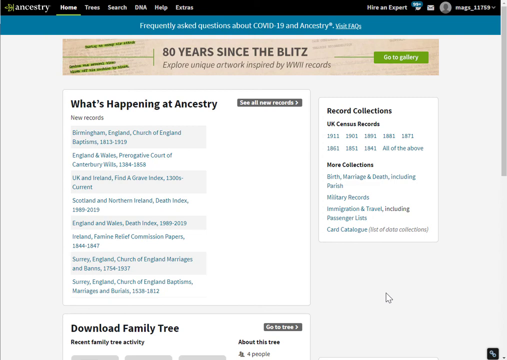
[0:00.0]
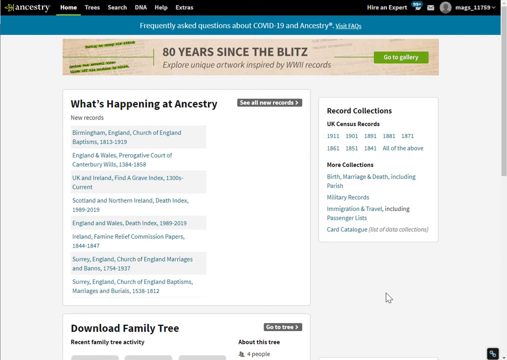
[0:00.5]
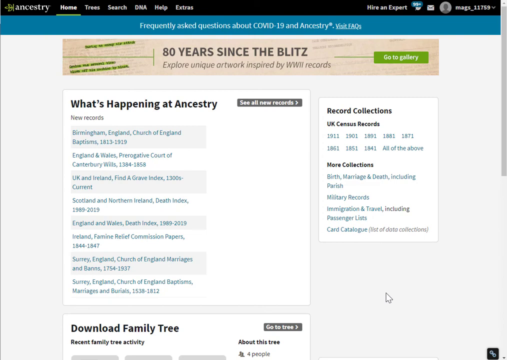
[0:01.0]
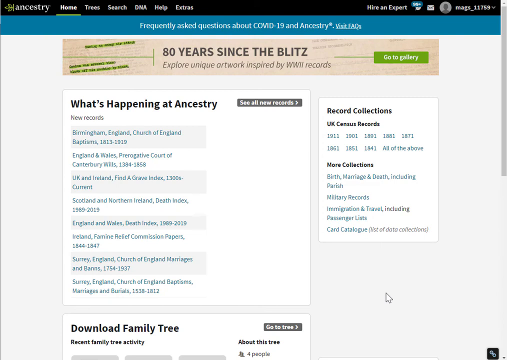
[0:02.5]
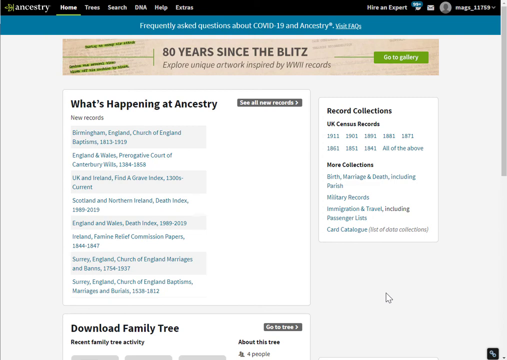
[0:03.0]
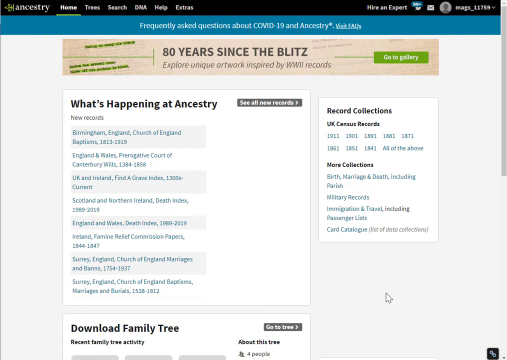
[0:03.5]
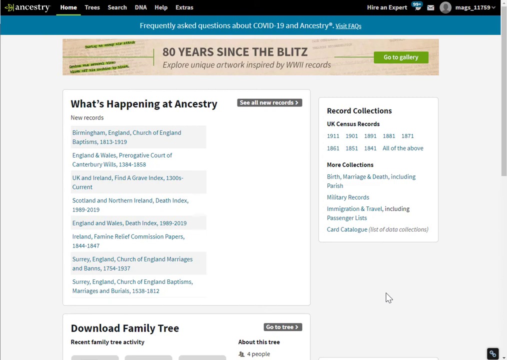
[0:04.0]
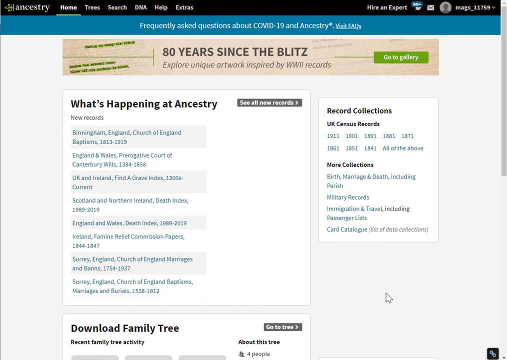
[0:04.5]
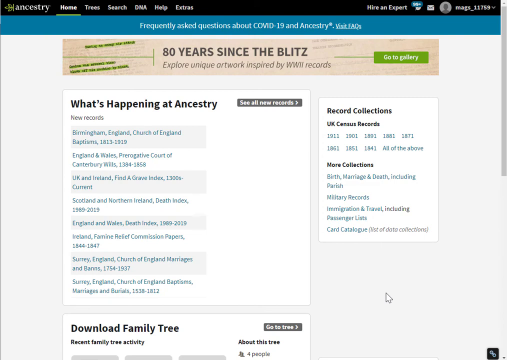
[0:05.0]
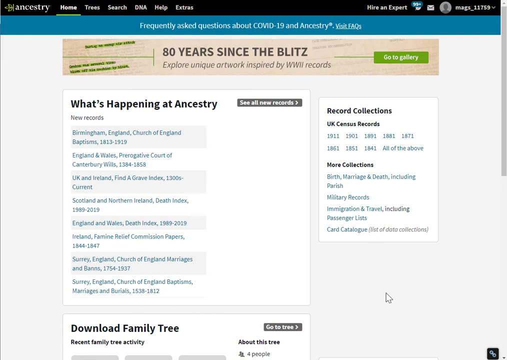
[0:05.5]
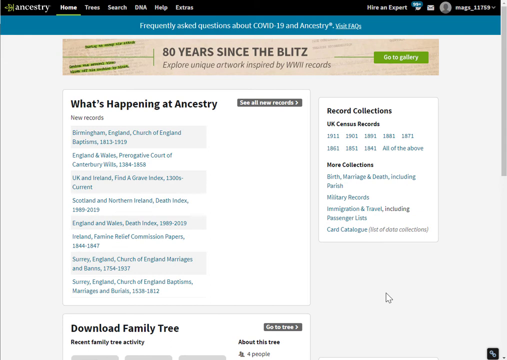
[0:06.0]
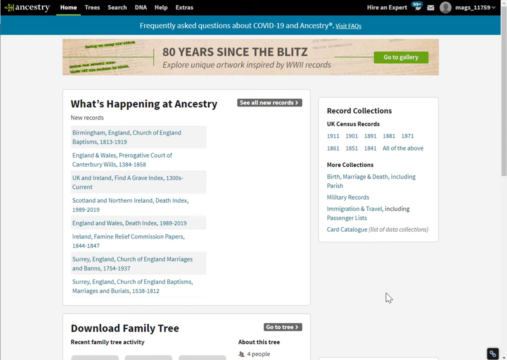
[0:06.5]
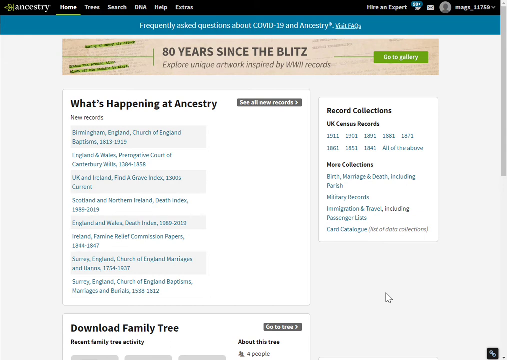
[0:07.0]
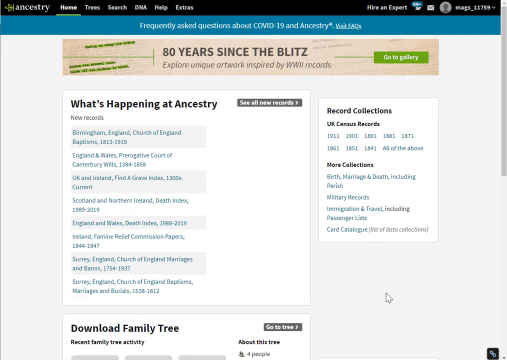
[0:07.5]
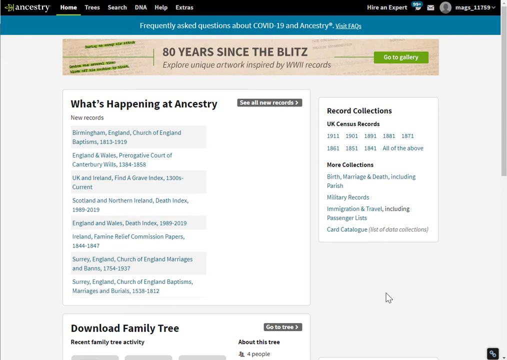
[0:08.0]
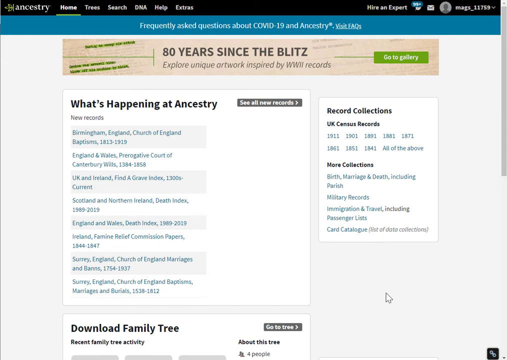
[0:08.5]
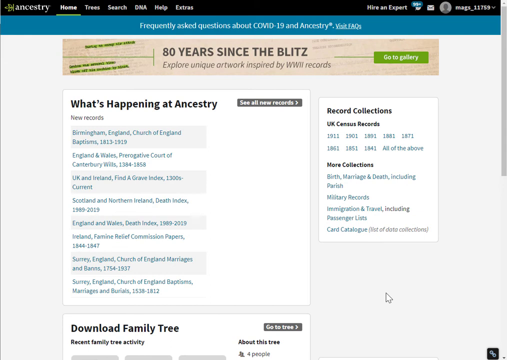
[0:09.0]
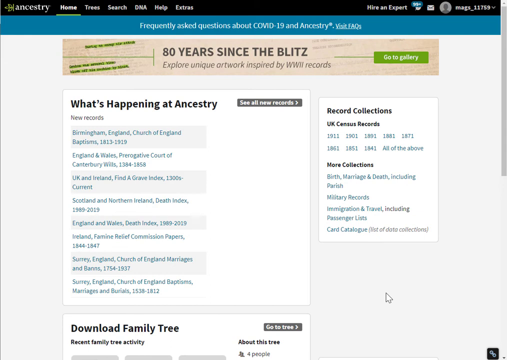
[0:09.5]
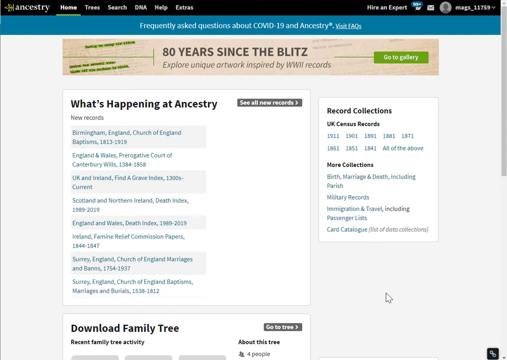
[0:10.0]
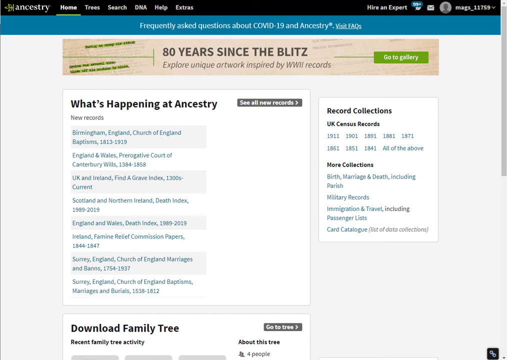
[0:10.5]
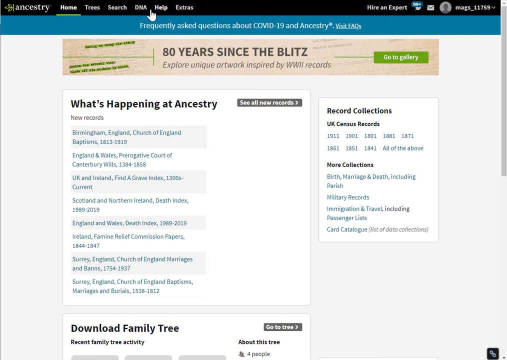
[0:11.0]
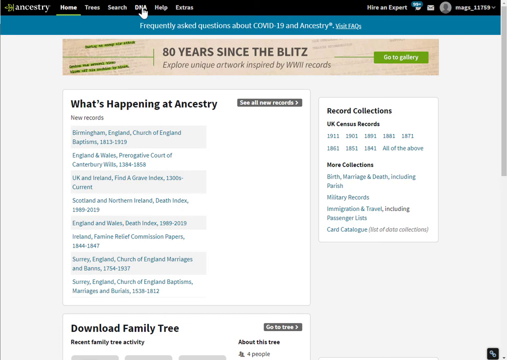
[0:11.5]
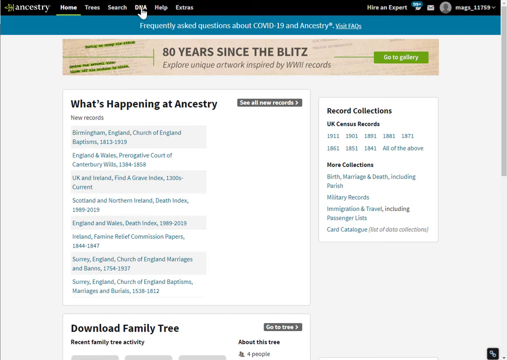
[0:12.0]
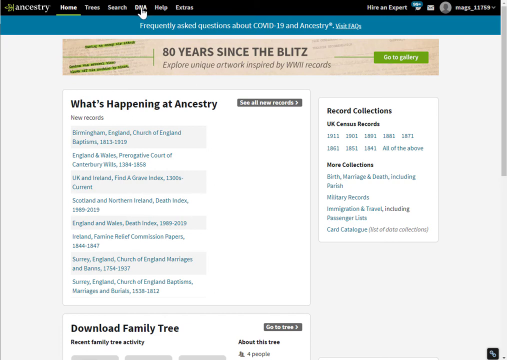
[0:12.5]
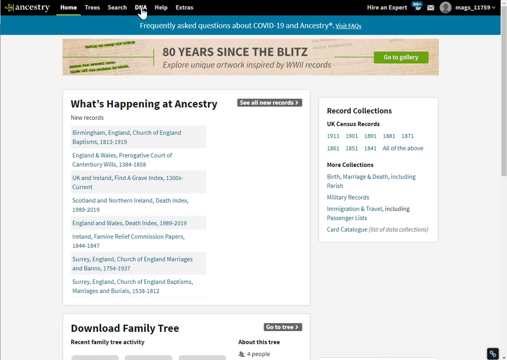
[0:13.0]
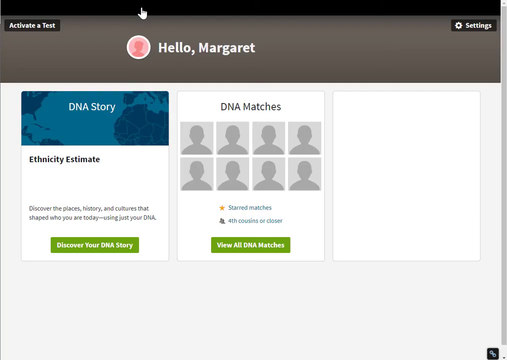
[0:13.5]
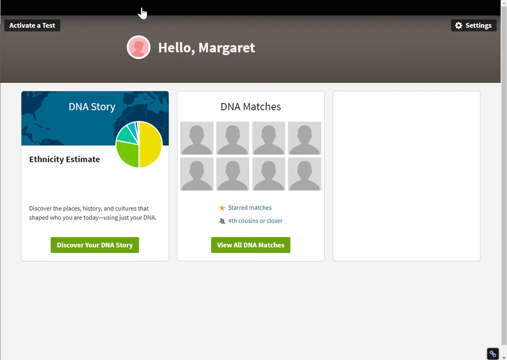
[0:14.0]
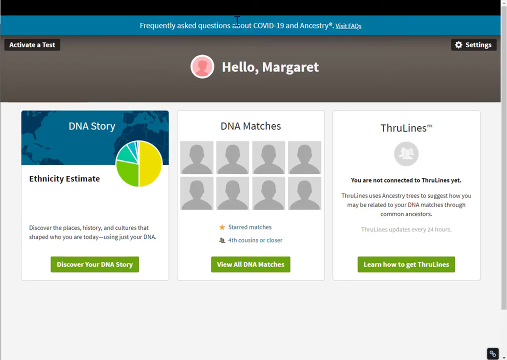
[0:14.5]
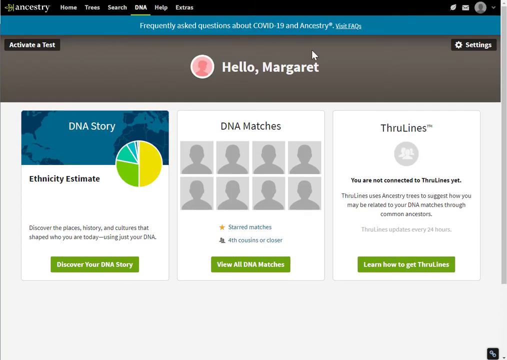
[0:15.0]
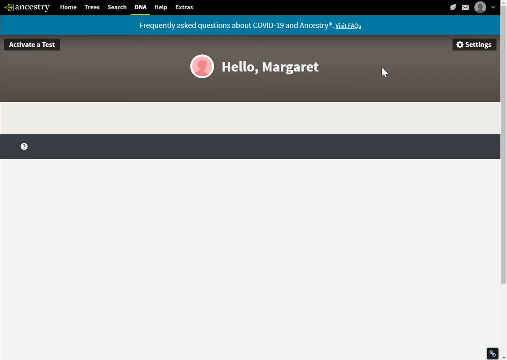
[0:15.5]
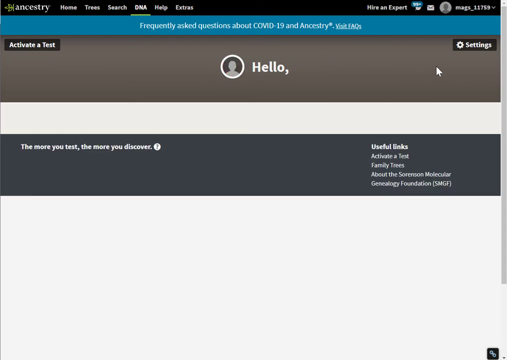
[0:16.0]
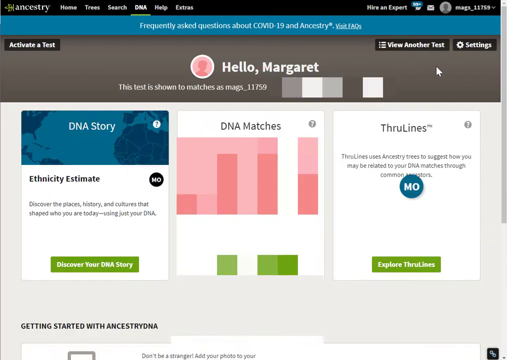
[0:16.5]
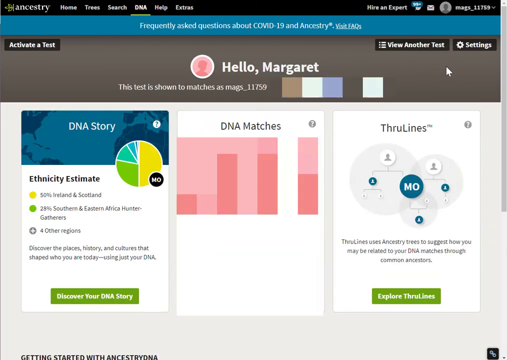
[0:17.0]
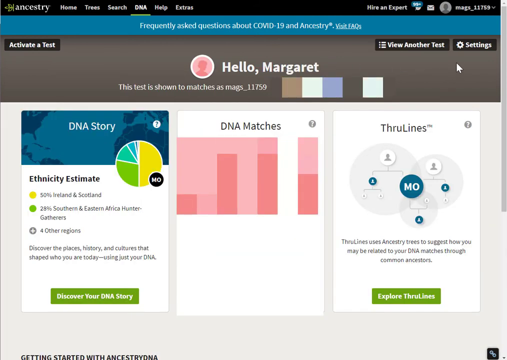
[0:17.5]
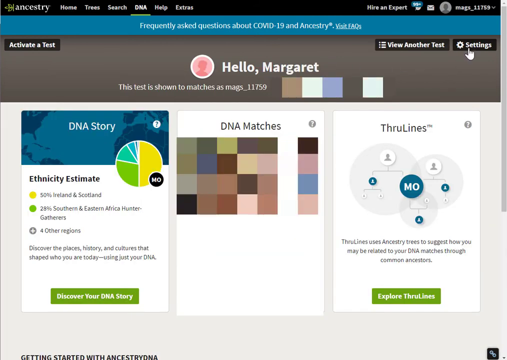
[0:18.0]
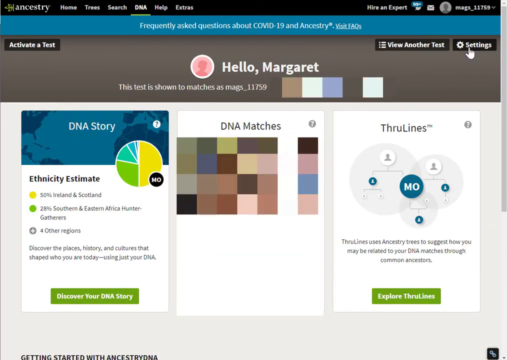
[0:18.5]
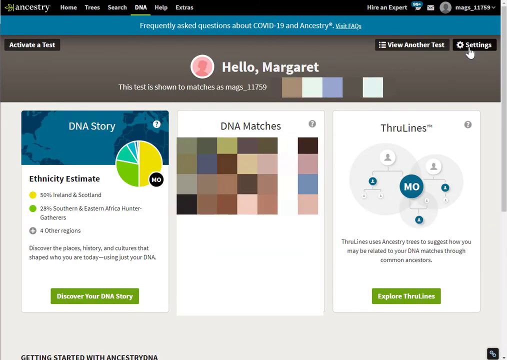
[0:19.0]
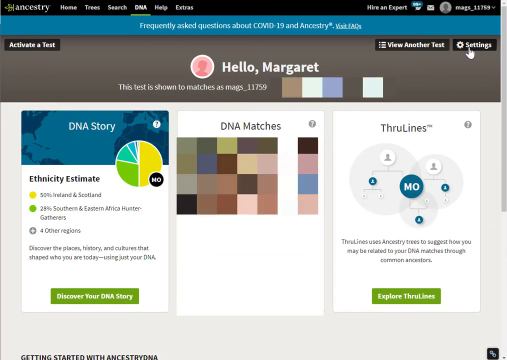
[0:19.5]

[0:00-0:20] A green tree logo is at the top left of the page, and to its right are the options home, tree, search, DNA, help and extras. The home page is currently open, shown by a green underline, and the word home is slightly bolder white. Right underneath, in blue, it says "frequently asked questions about COVID," apparently dating the video to the COVID period, along with a "visit FAQs" link. At the top right is a username, apparently "mags_11759," with a drop-down. A category says "what's happening in Ancestry" with about eight to ten links, including Birmingham, England and Church of England, and "download family tree" is at the bottom. The cursor moves up to DNA, turning into a little finger pointer, and clicks it; the page says "hello Margaret." There is no thumbnail for the username, just a generic red user icon. They click something else, a test, which is shown in matches under the username mags. Underneath are three boxes, including "hello margaret" and "dna story." A pie chart with yellow making up half shows 50% Ireland, 20% Southern Eastern Africa and four other regions.